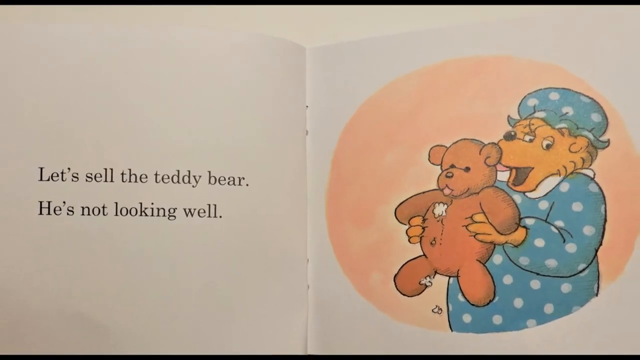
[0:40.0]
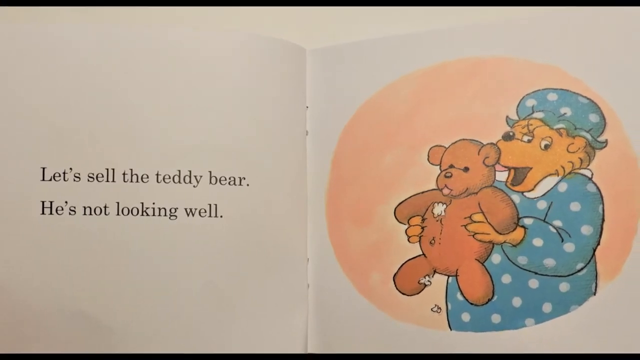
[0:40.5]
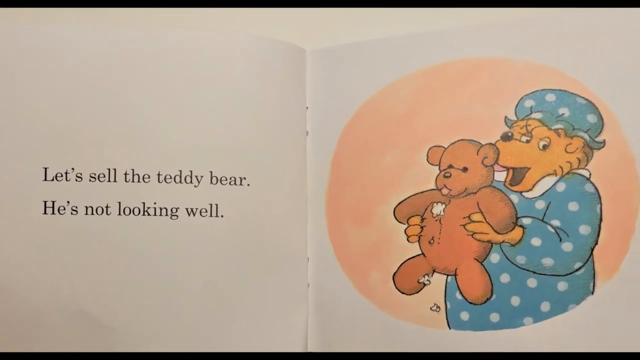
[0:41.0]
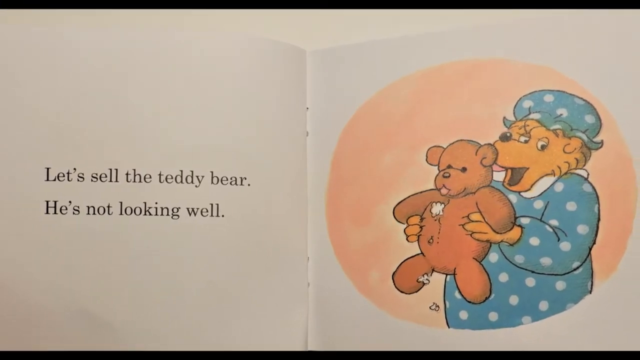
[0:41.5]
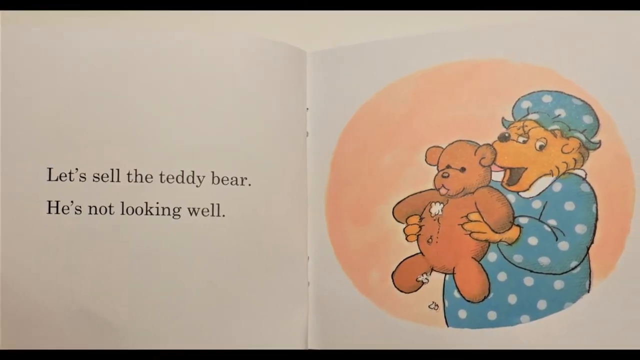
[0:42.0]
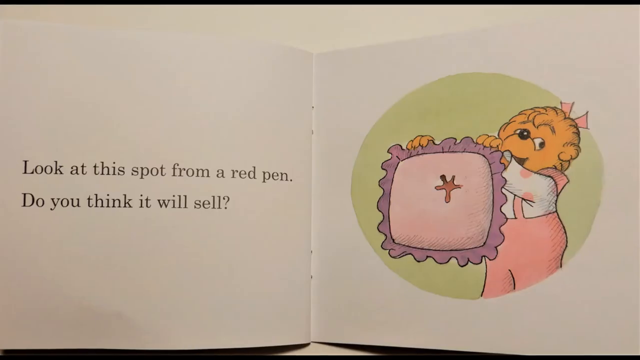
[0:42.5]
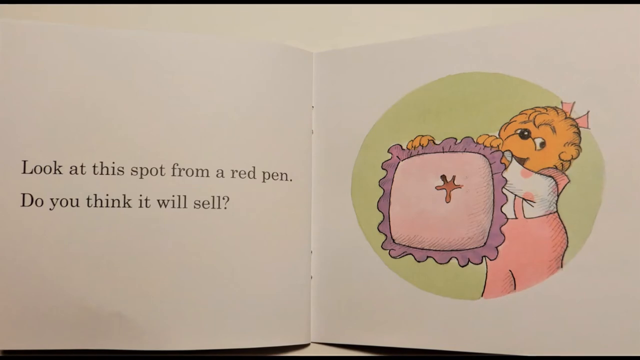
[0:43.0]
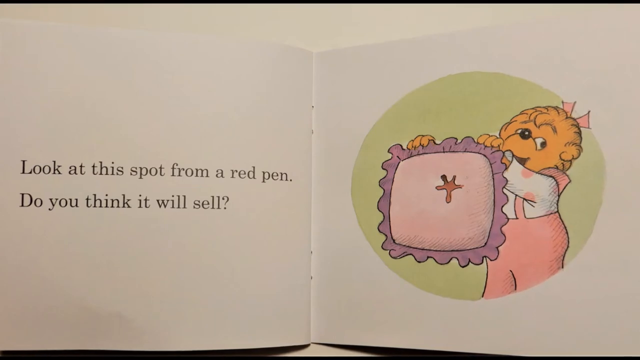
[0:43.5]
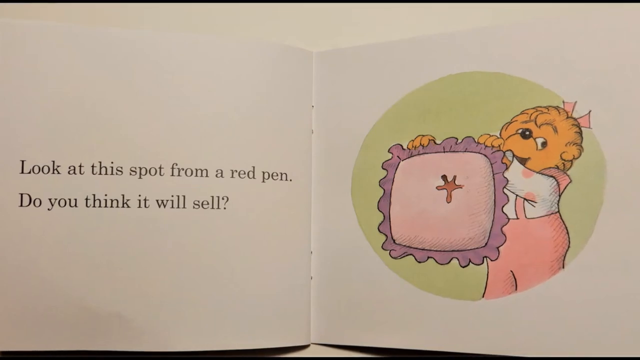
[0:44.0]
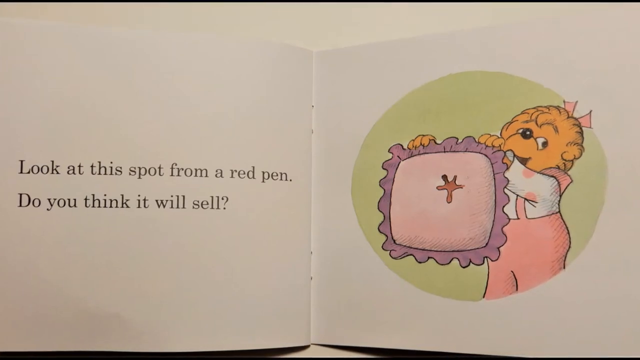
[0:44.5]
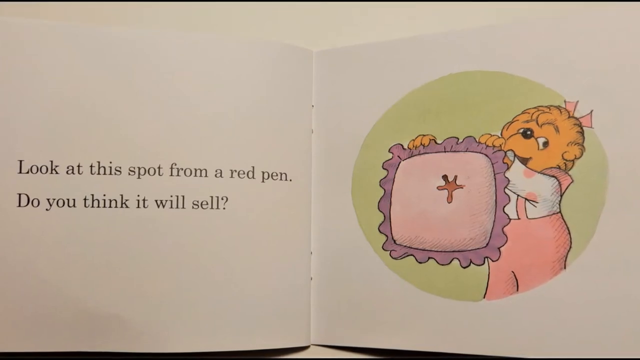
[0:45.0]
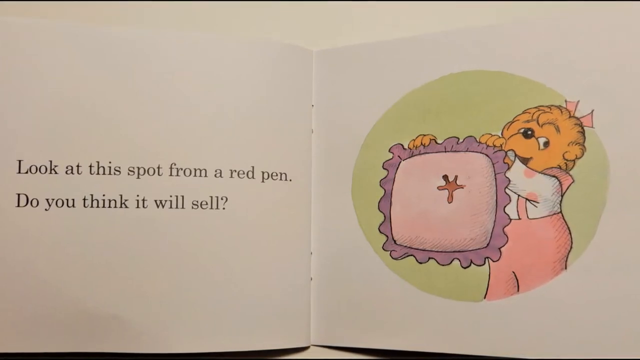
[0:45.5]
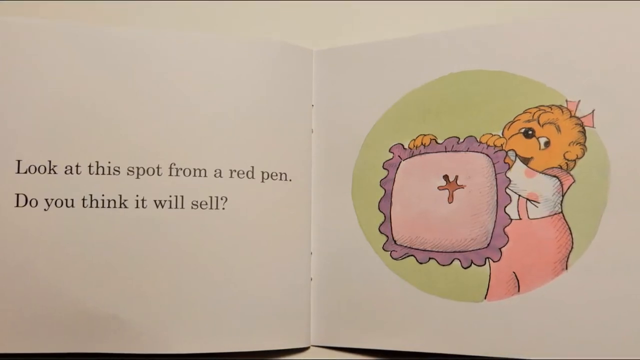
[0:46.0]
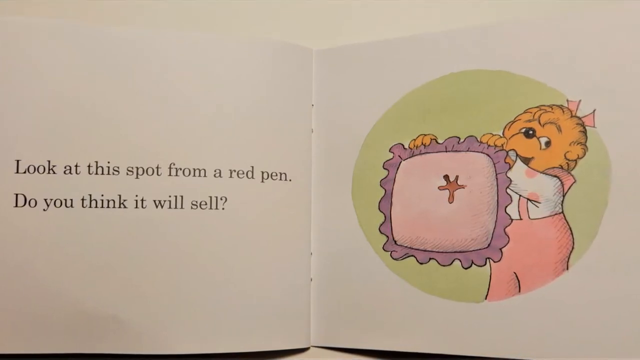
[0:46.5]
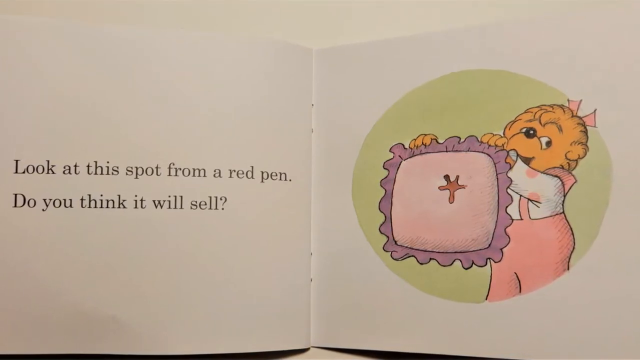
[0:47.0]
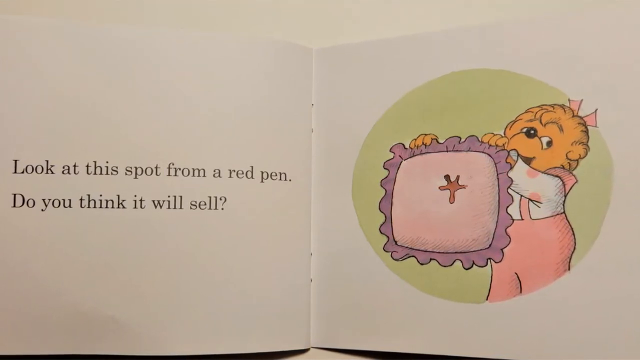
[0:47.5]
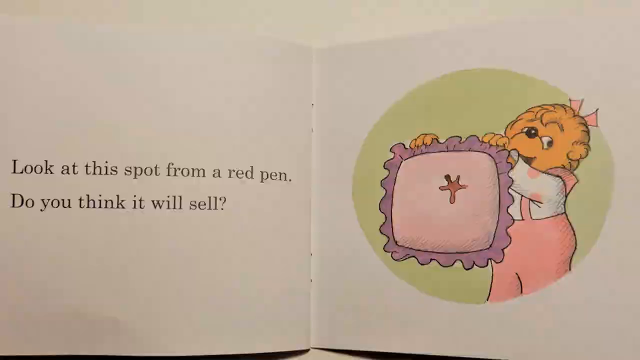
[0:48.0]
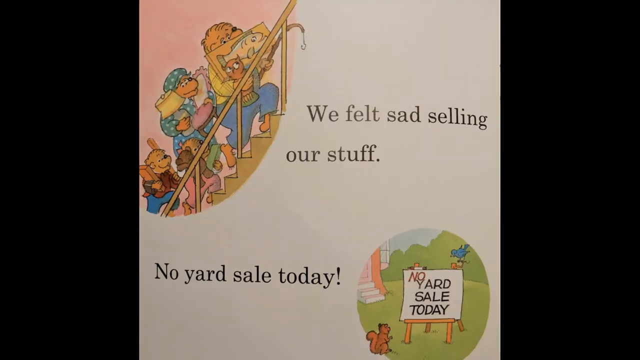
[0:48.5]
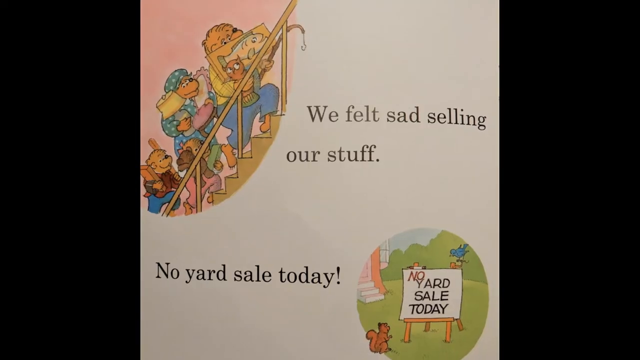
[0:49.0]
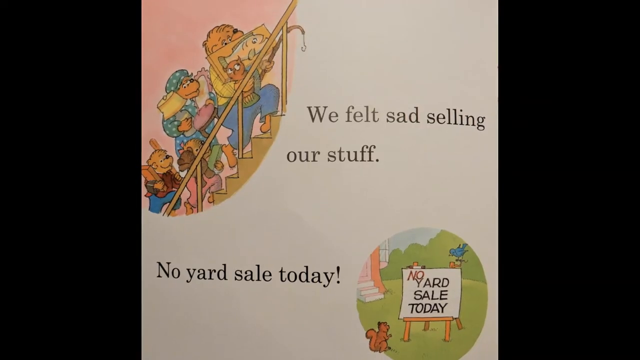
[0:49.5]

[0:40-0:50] The camera slowly zooms out from that page before switching to another page. The left side is white with some black text, and the right side is white except for a green circle in the middle, where the daughter bear appears to be. She holds up a pillow that seems to have a hole in it and looks to her left, off the camera. Near the end, the view switches very abruptly to another page with images and text: an image at the top left, an image at the bottom right, and two small passages of text in the middle. Black bars appear on the left and right of the screen when this page pops up.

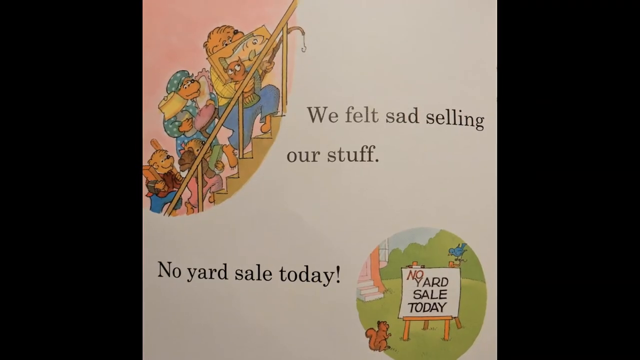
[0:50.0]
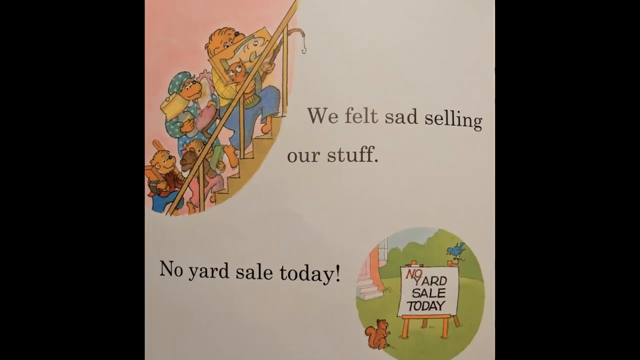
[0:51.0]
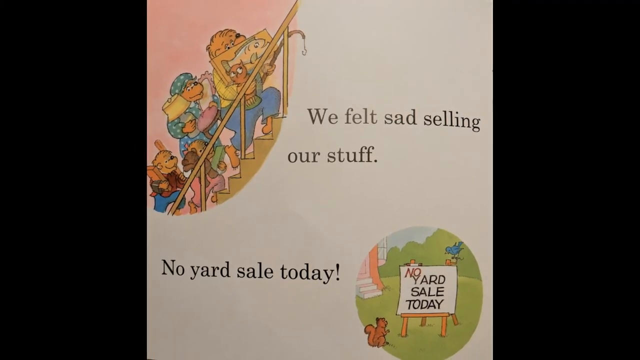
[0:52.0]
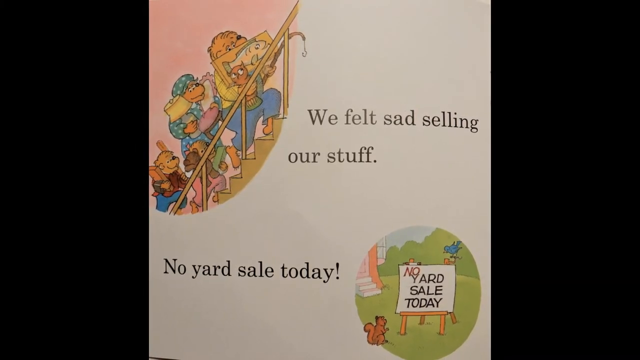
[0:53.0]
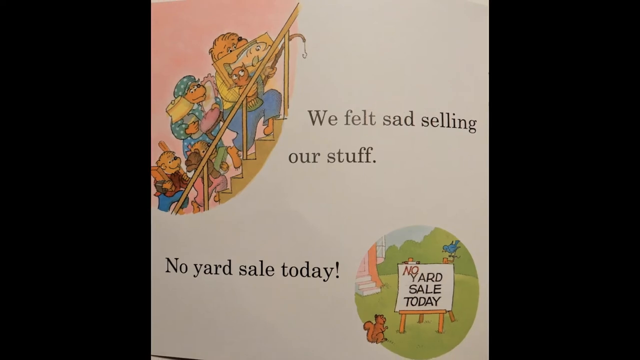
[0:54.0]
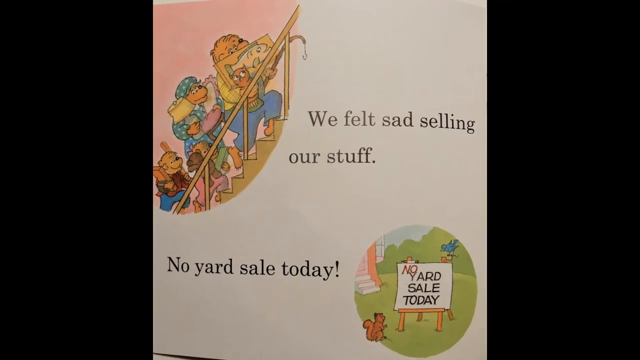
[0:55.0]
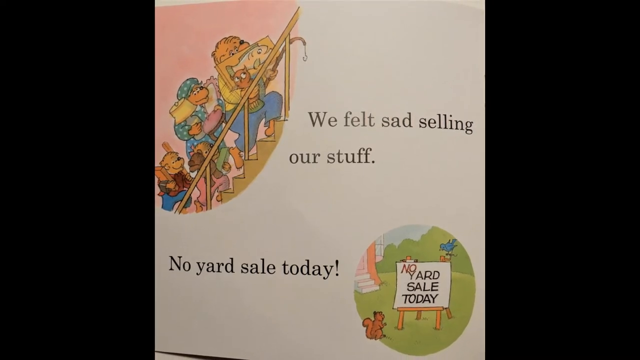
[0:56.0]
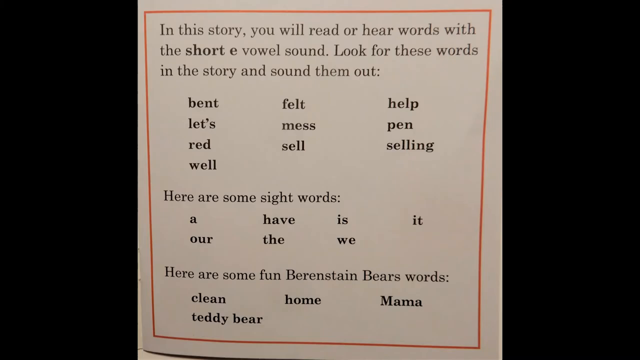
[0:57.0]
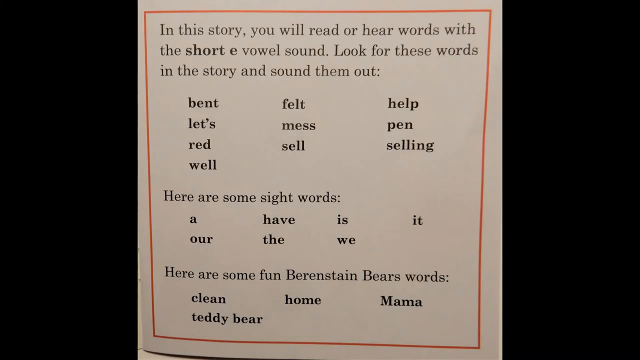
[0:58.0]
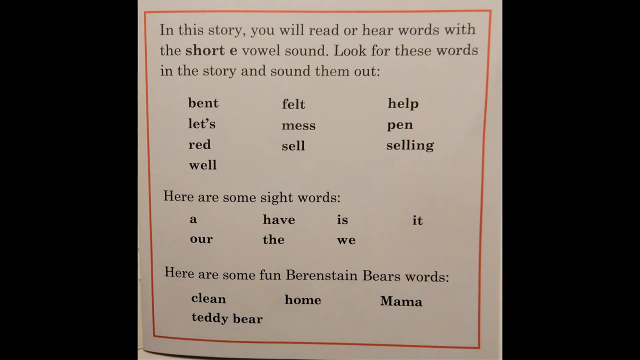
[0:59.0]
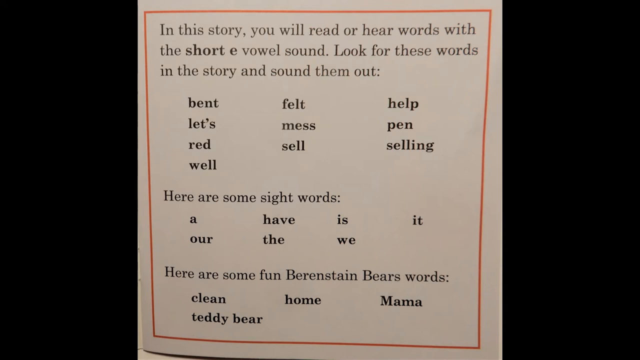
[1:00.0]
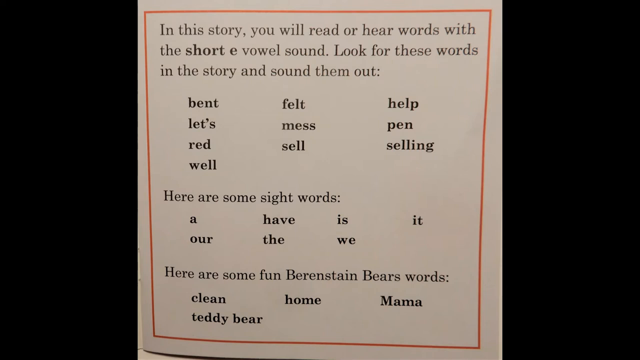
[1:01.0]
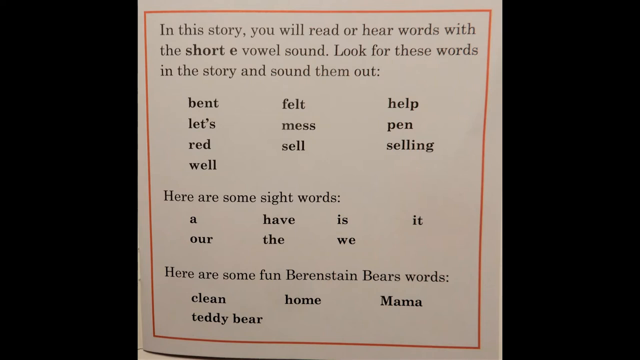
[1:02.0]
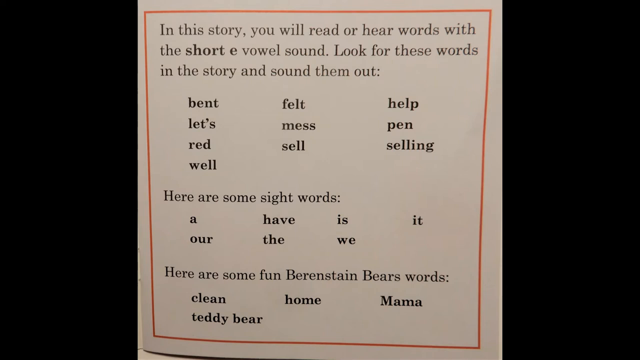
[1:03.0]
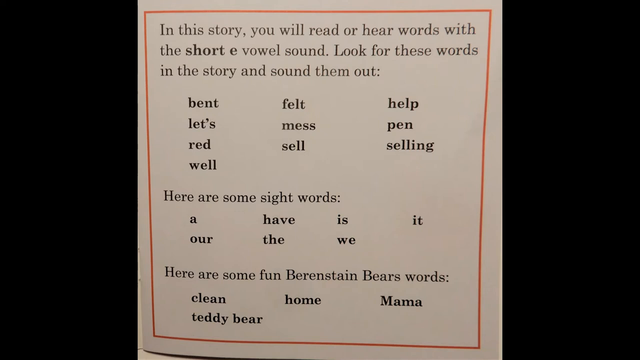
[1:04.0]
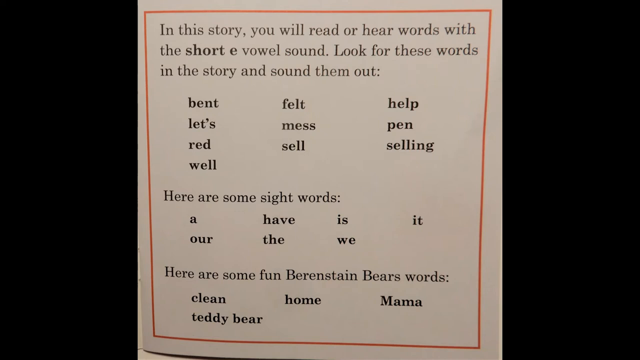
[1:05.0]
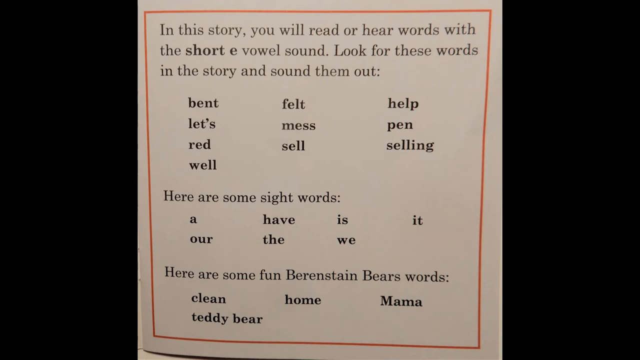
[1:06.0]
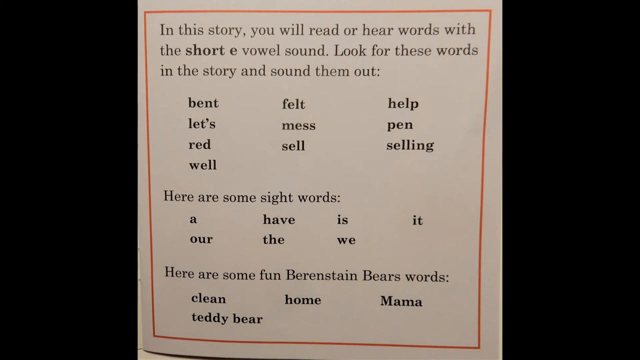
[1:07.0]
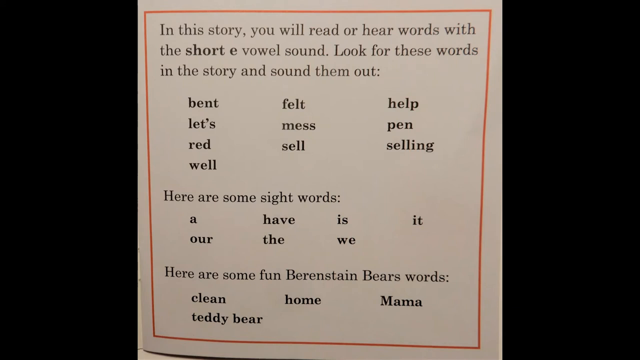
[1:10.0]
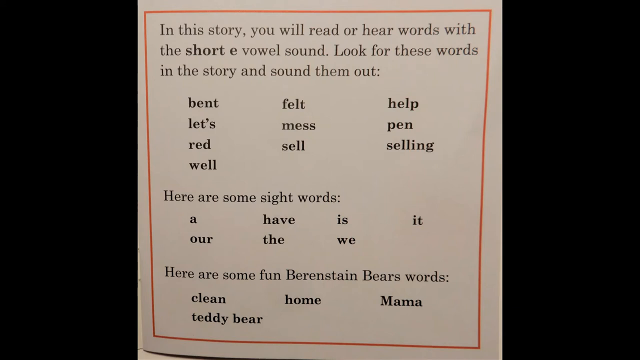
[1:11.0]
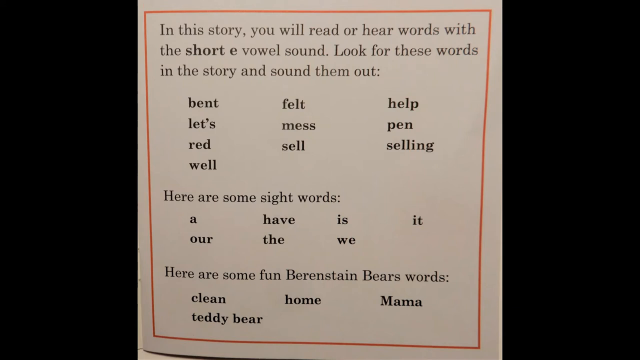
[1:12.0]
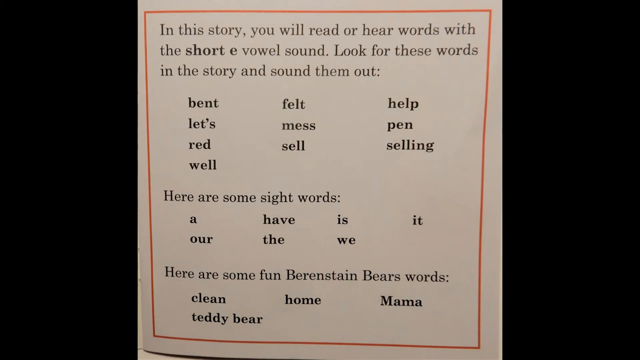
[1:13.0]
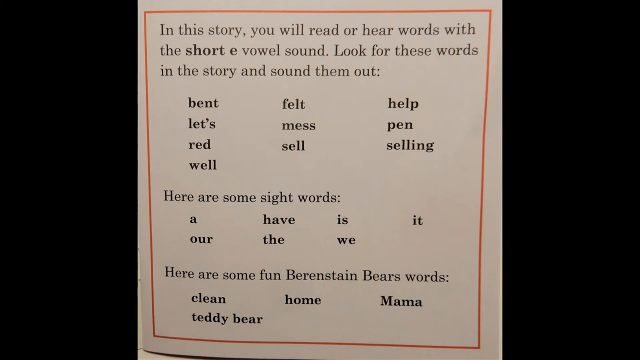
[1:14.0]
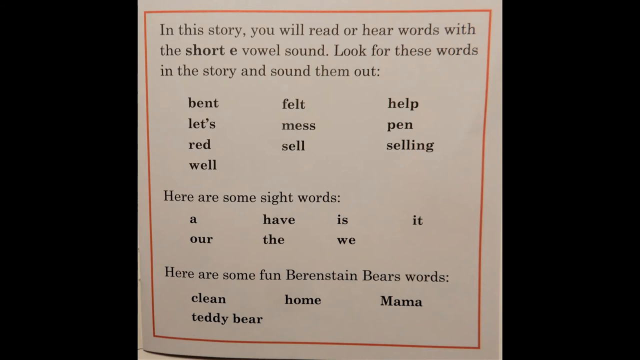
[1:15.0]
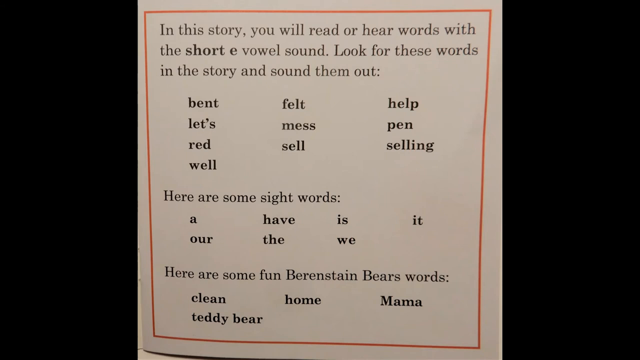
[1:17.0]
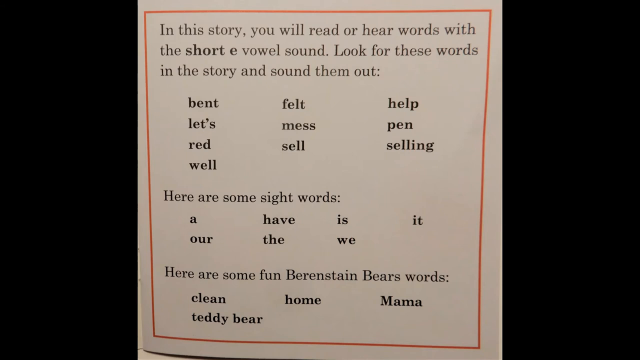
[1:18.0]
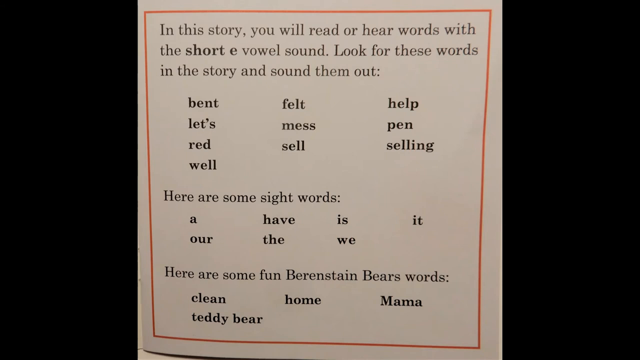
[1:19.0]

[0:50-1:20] The camera continues slowly moving out of the page with two images and two passages of text. The top left image shows the whole family walking upstairs, carrying a bunch of objects in their hands. The bottom right image shows what looks like some sort of paint easel with the text "no yard sale today" on it, and a squirrel and a bird nearby in the grass. The view then switches to an image with text and a thin orange line border. The text says that the reader will read or hear certain words with the short e vowel sound and tells the reader to look out for these words and sound them out. It also lists some sight words within the book and some fun Berenstain Bears words below each explanation. The words to look out for are in bold, and this image stays on screen to the end of the shot.